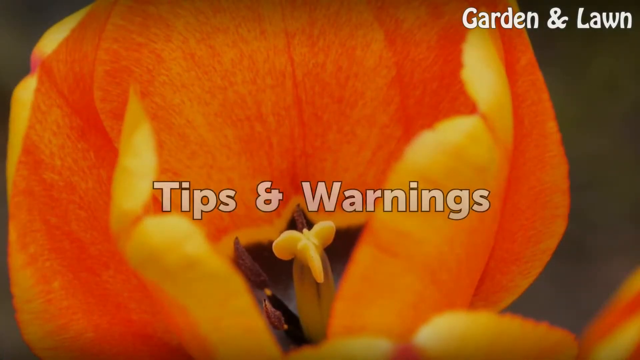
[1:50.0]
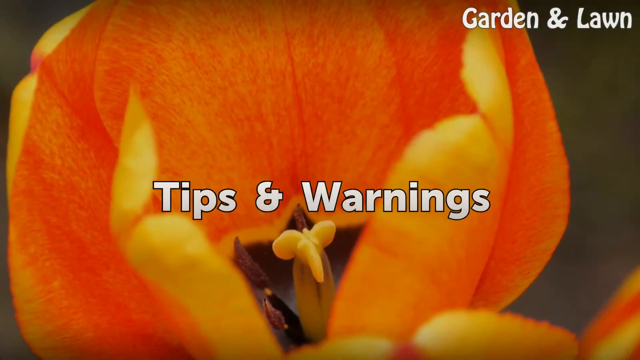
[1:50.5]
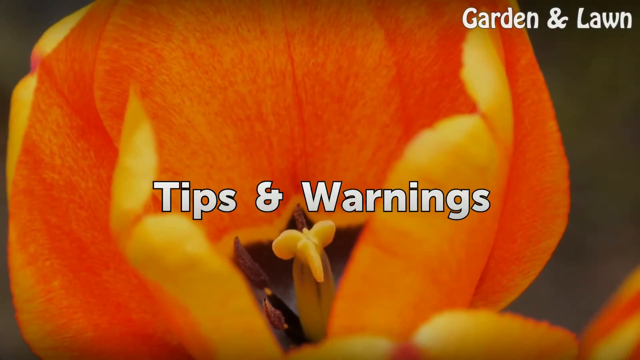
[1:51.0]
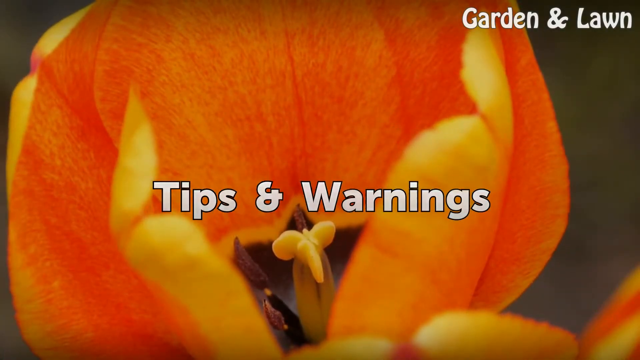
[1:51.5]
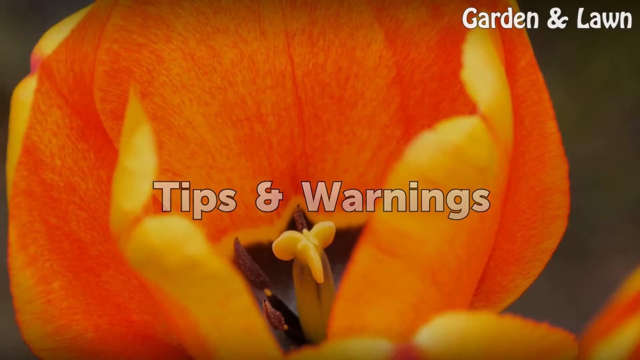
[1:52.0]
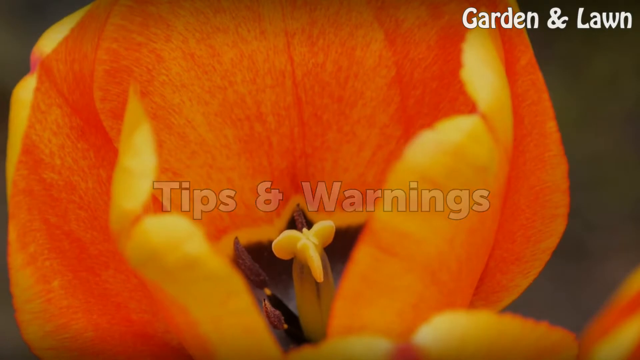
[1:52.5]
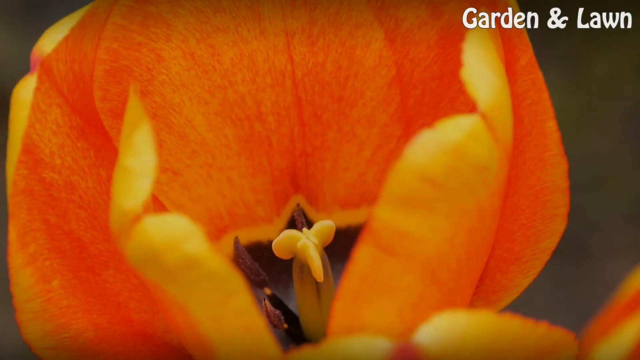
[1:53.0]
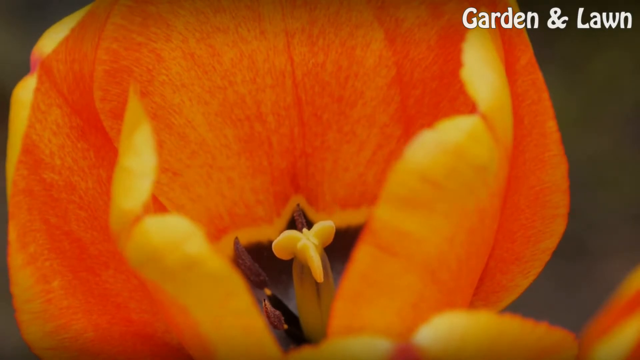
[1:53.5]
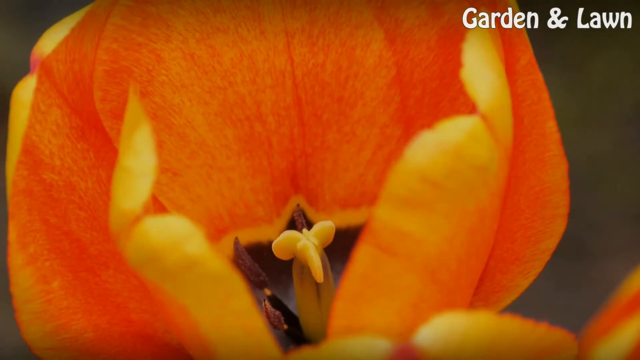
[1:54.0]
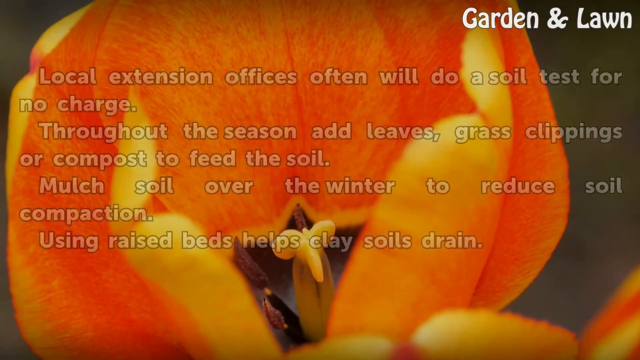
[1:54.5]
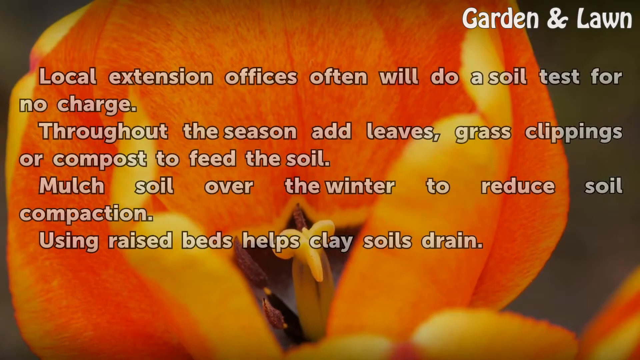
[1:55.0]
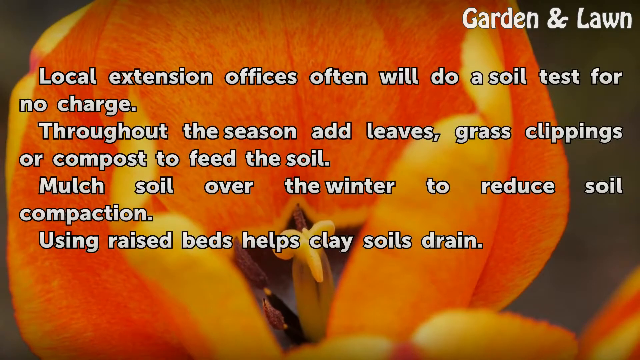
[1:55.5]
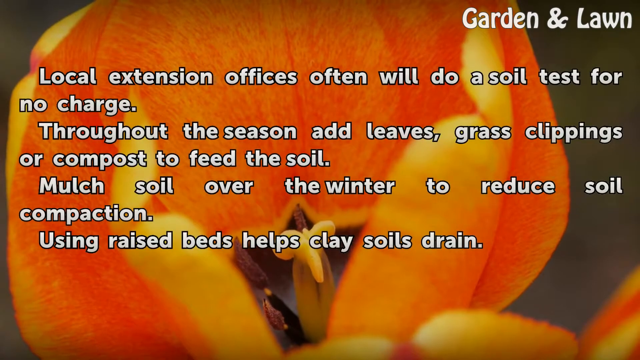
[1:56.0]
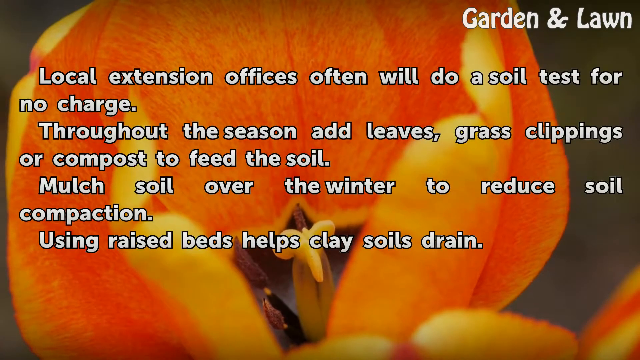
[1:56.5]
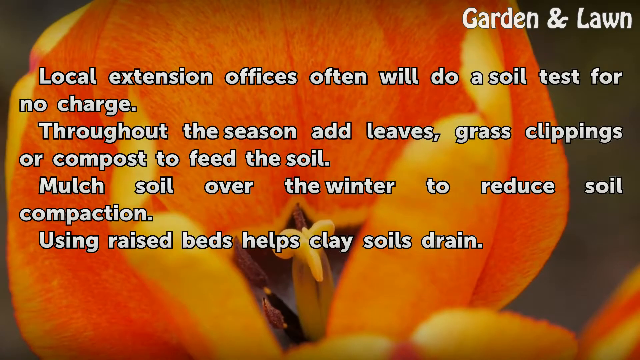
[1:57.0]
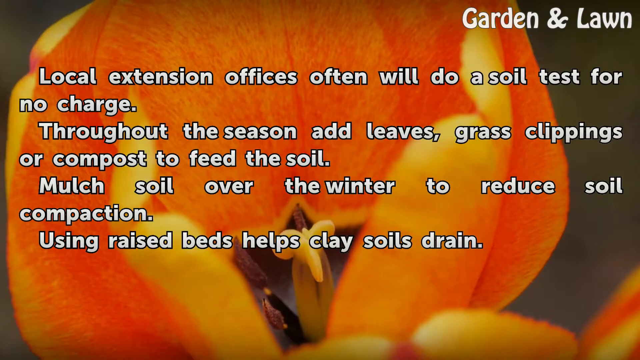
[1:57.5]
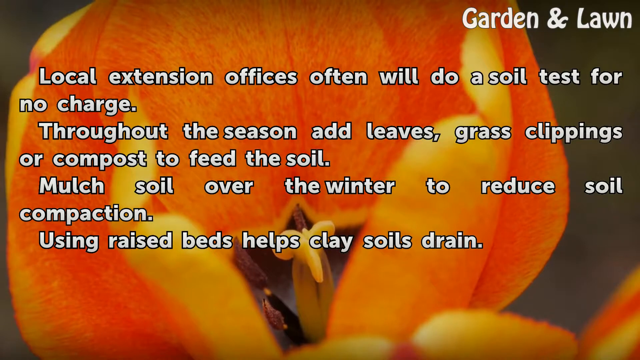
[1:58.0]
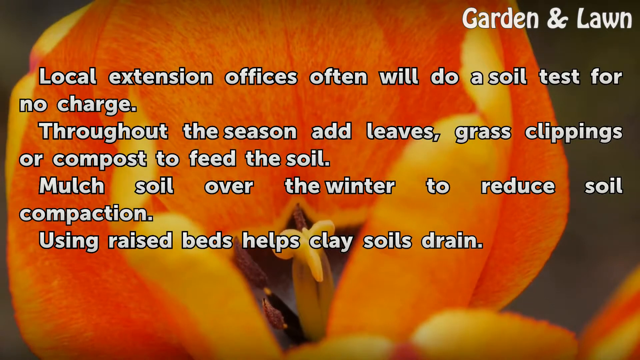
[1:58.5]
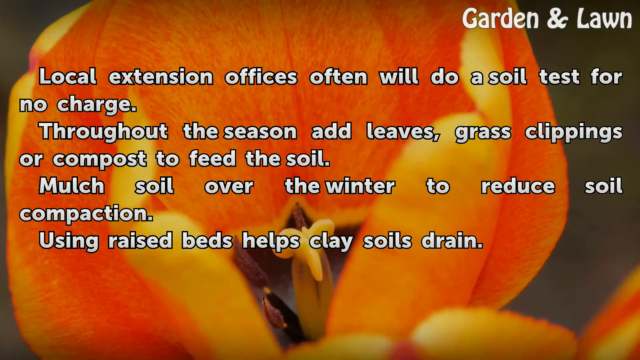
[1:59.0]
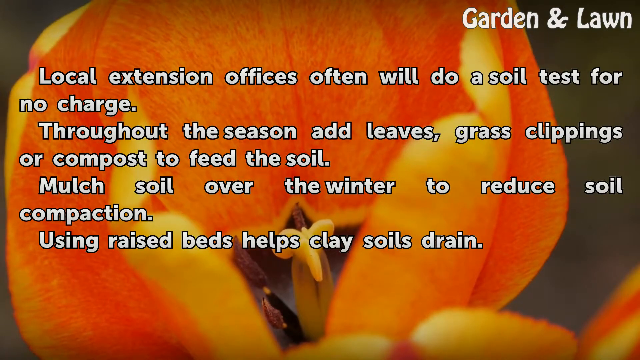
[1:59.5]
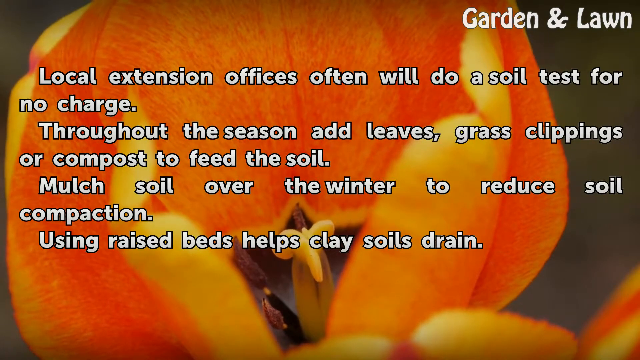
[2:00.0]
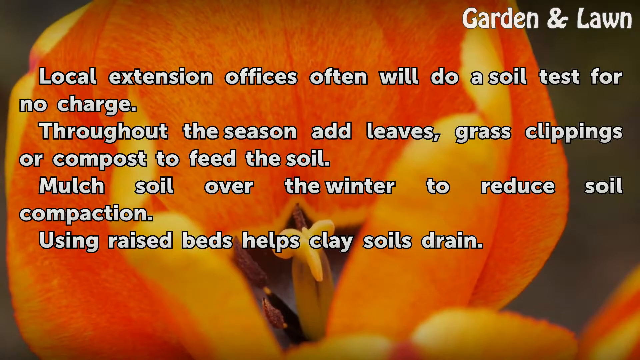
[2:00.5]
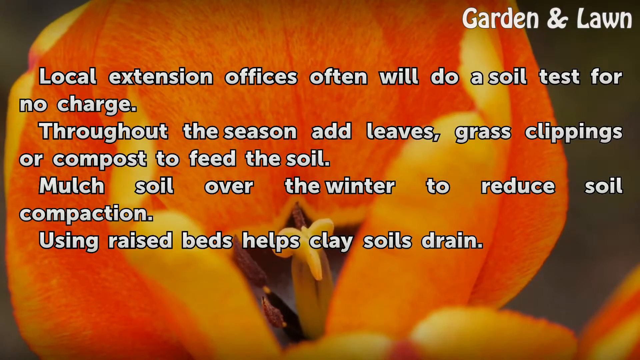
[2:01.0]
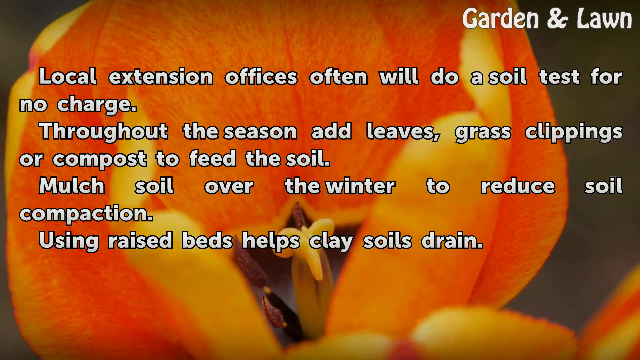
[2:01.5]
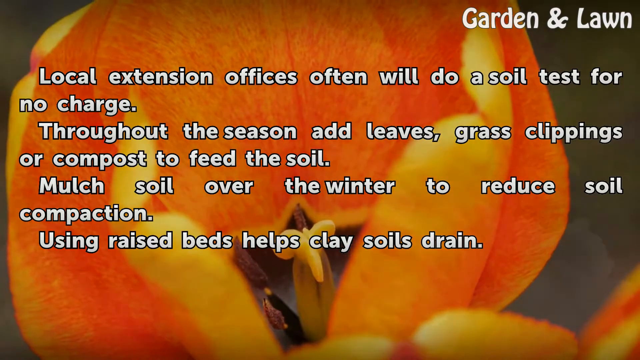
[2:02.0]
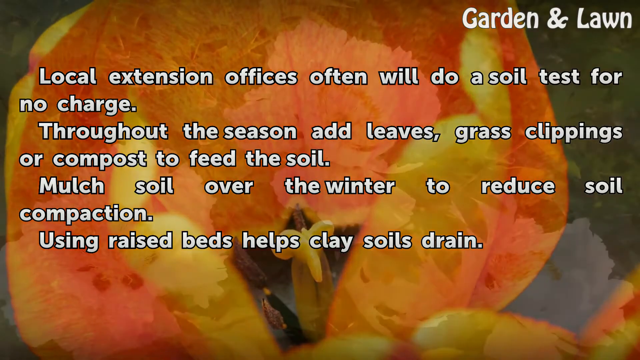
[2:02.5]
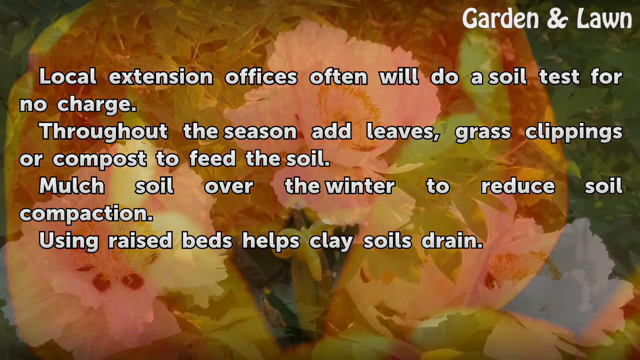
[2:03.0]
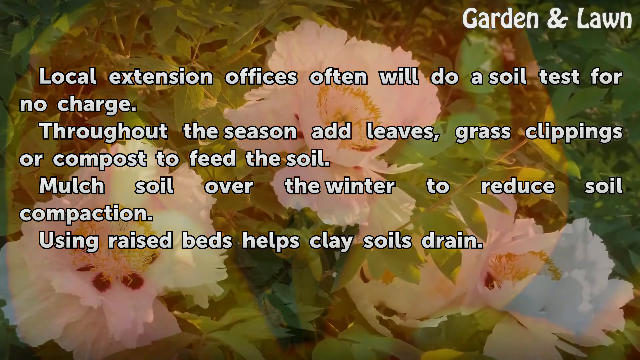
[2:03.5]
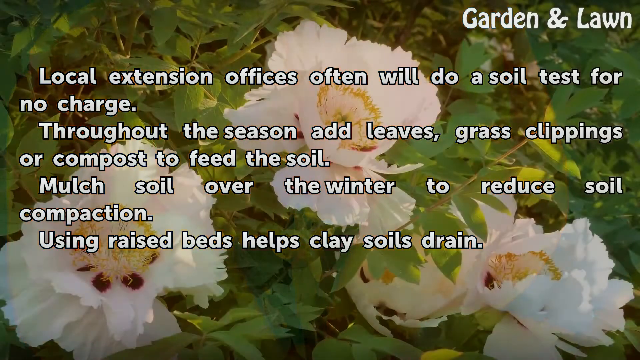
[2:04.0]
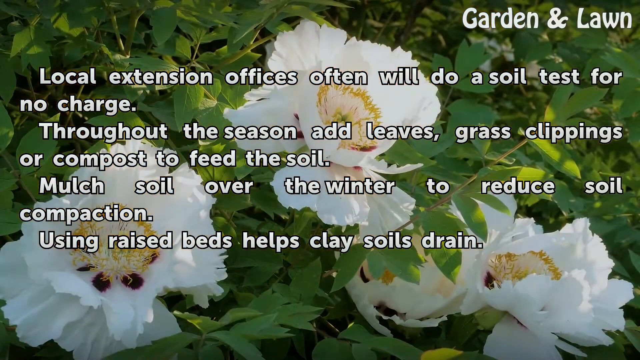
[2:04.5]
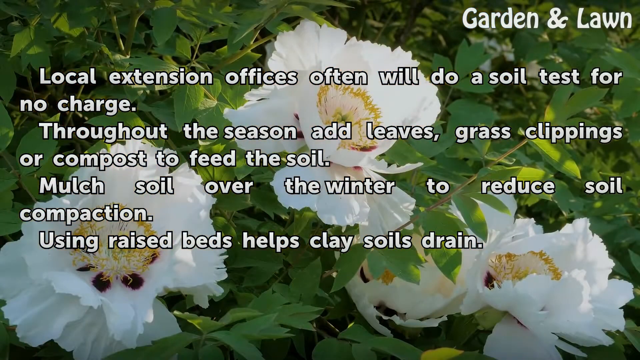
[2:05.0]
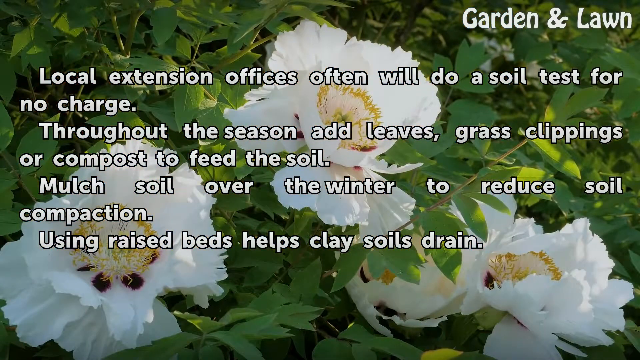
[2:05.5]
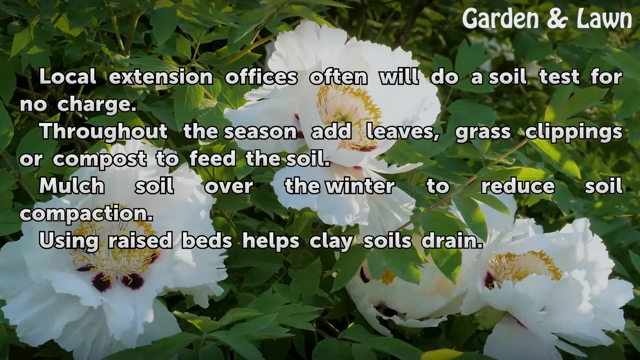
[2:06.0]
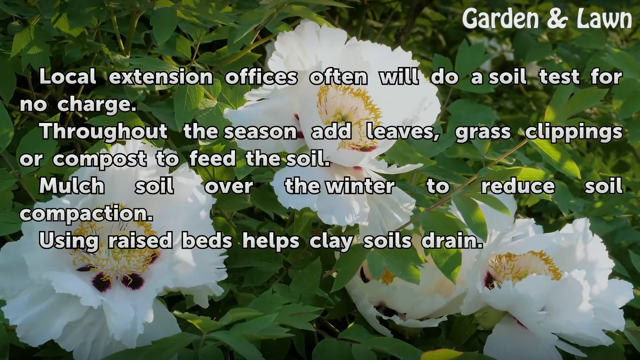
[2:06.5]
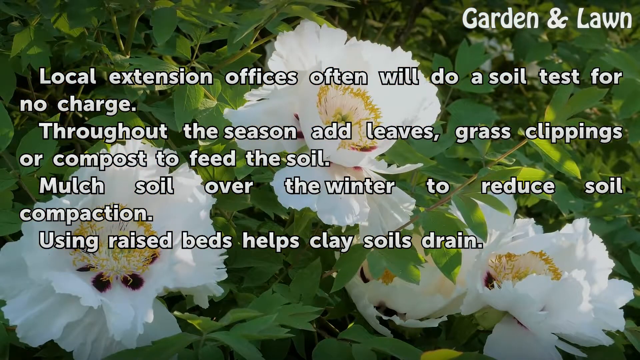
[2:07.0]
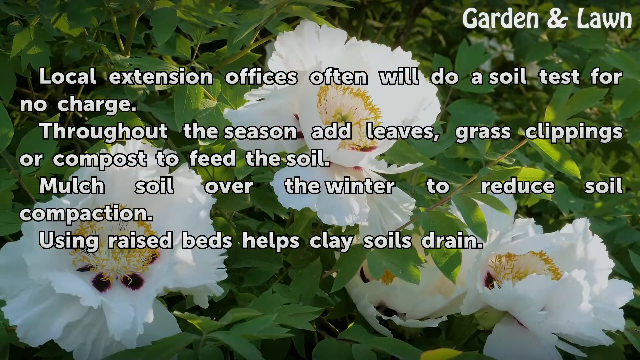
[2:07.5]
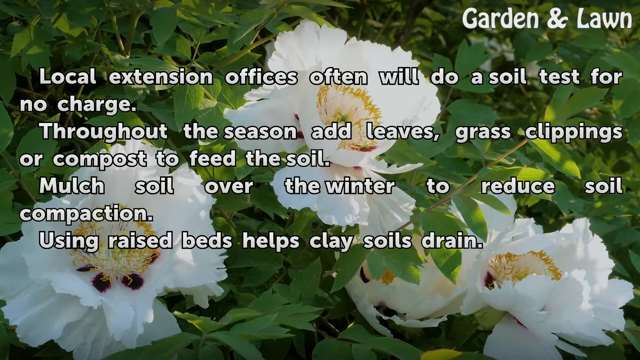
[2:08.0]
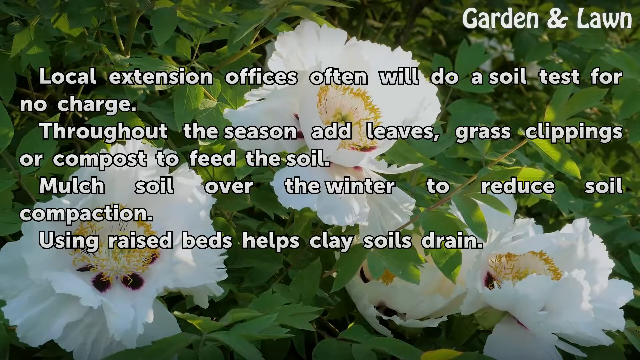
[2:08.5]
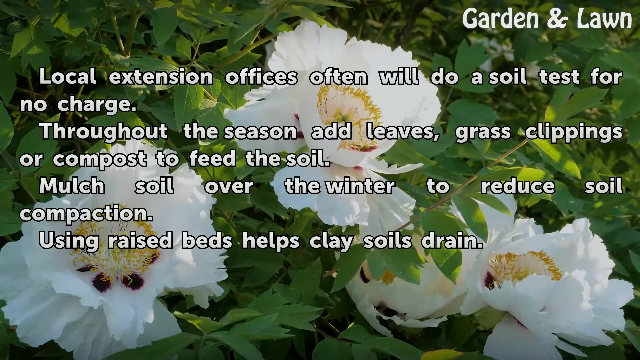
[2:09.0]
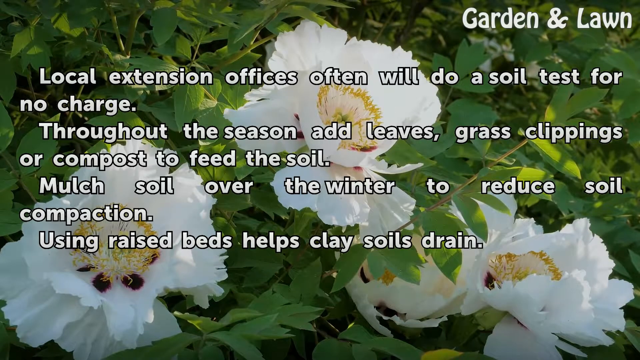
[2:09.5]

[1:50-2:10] The peach-coloured flower is in the background, with "tips and warnings" in white text centred in the middle of the screen. This is a still photograph, not a moving image. White text then fades in: "local extension offices often will do a soil test for no charge. Throughout the season, add leaves, grass clippings or compost to feed the soil. Mulch soil over the winter to reduce soil compaction, using raised beds to help clay soils drain." The background flower gently fades away to reveal more plants: four flowers with darker yellow centres, an inner layer of petals forming a cup and an outer layer forming a saucer. They are intermingled with lots of green bushy leaves, so they look like they are growing through or are part of a bush.